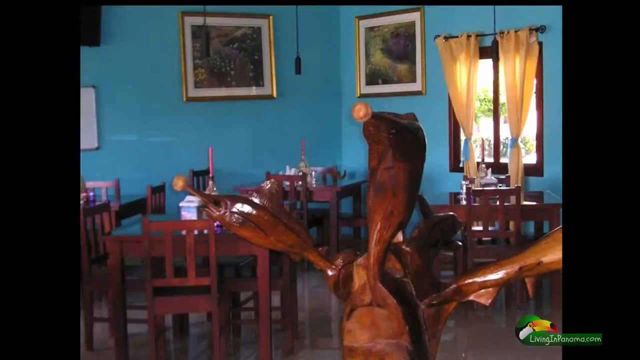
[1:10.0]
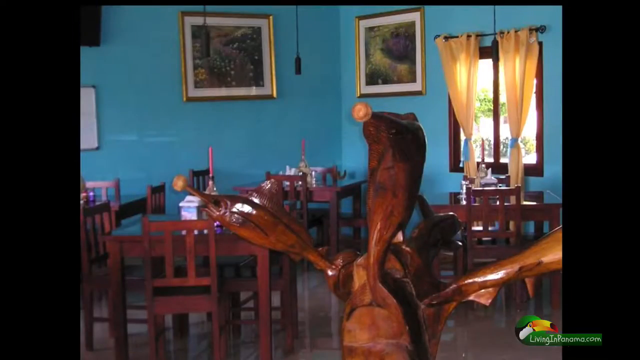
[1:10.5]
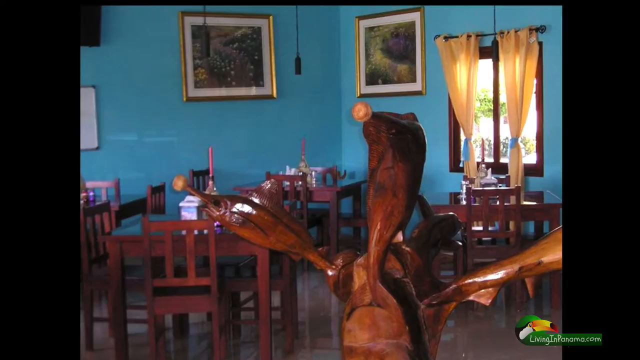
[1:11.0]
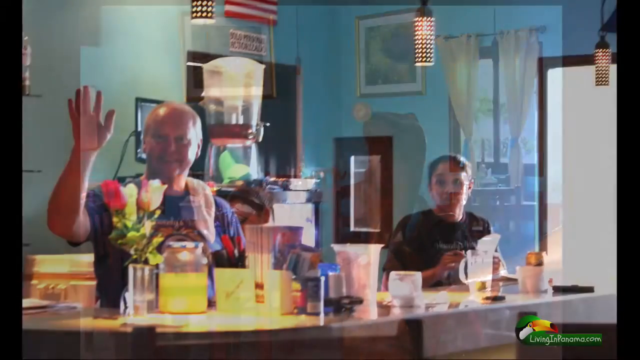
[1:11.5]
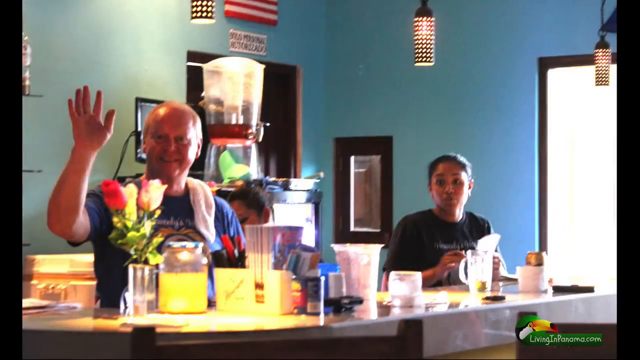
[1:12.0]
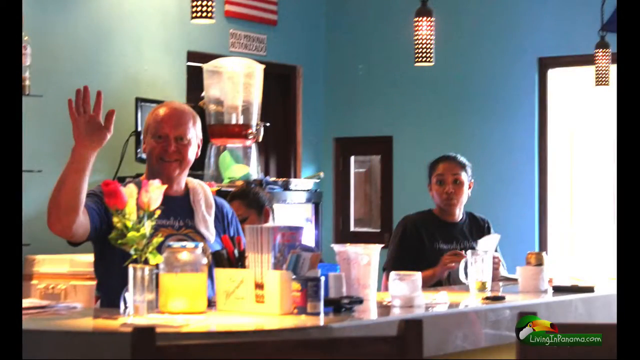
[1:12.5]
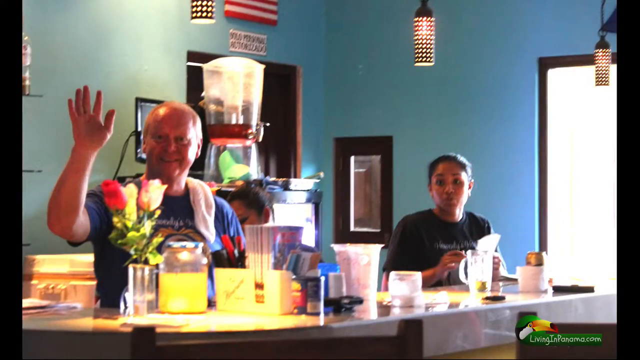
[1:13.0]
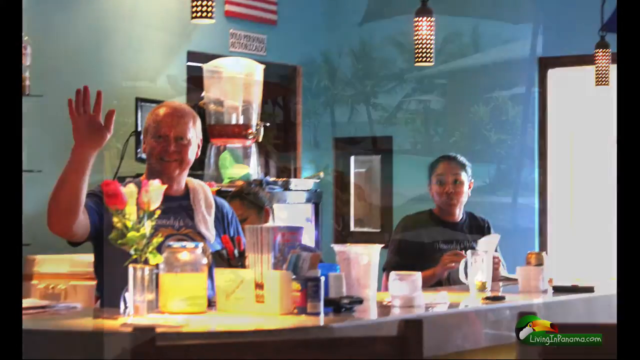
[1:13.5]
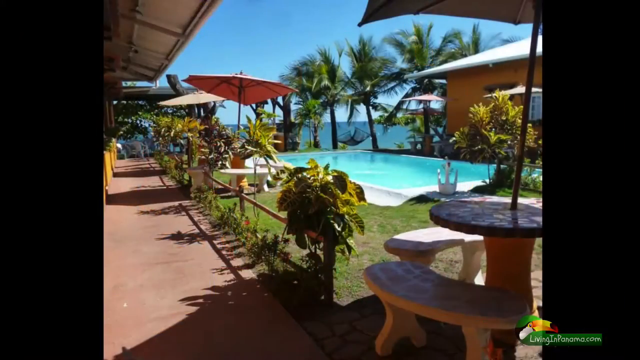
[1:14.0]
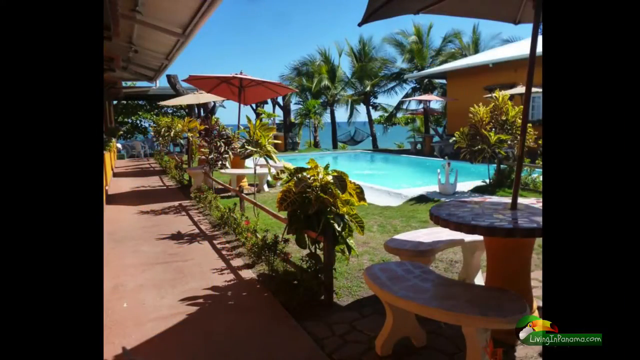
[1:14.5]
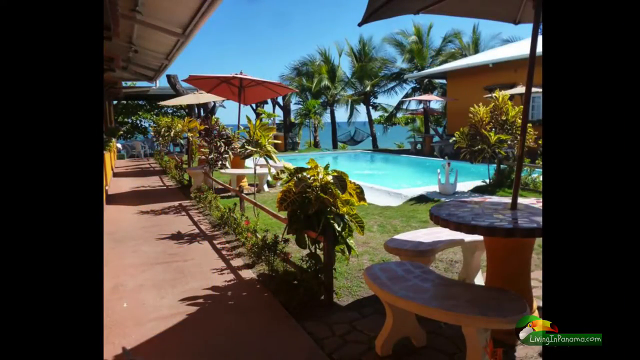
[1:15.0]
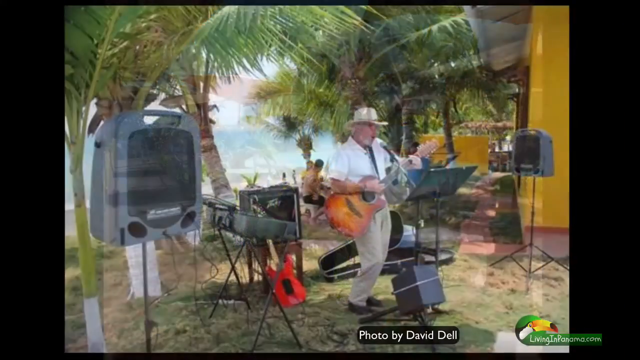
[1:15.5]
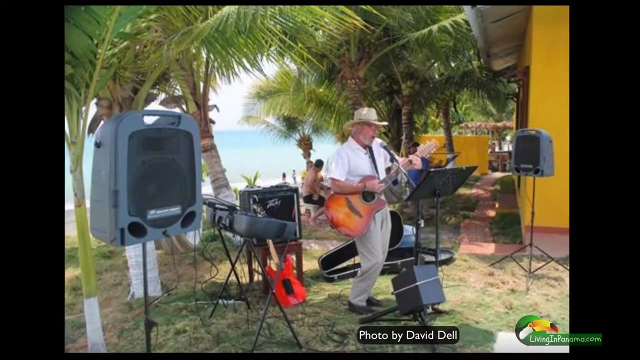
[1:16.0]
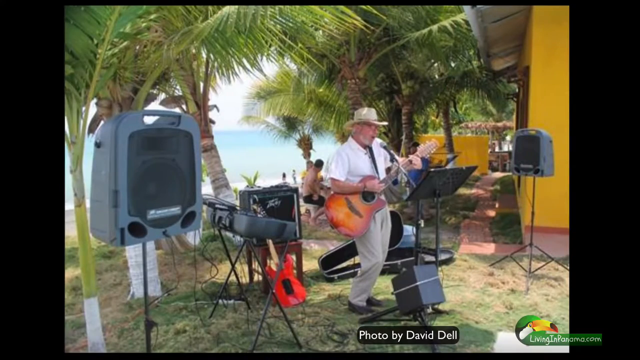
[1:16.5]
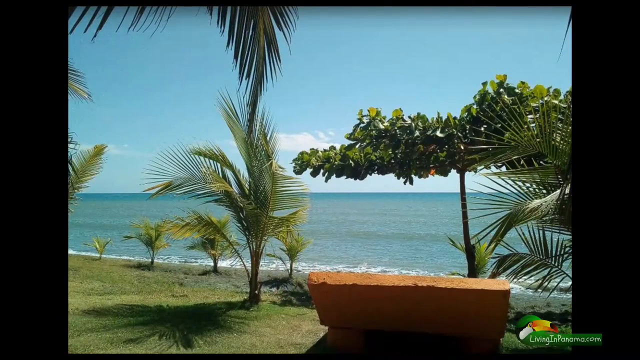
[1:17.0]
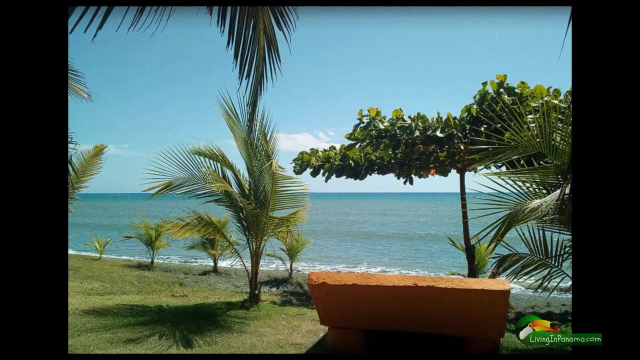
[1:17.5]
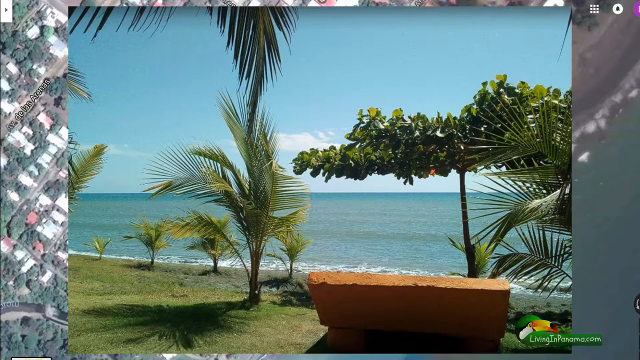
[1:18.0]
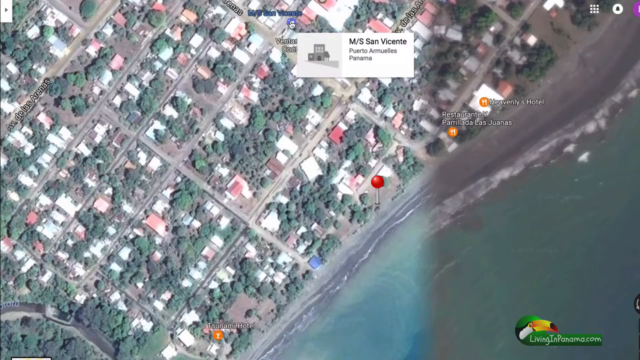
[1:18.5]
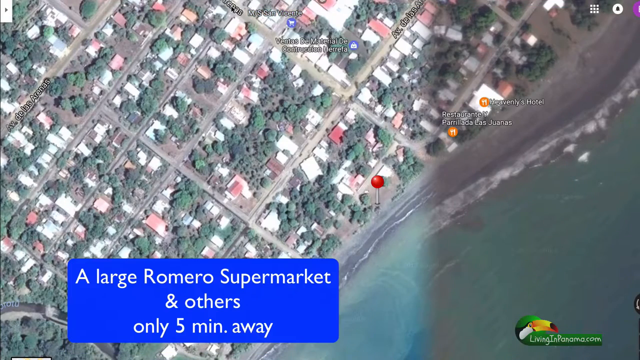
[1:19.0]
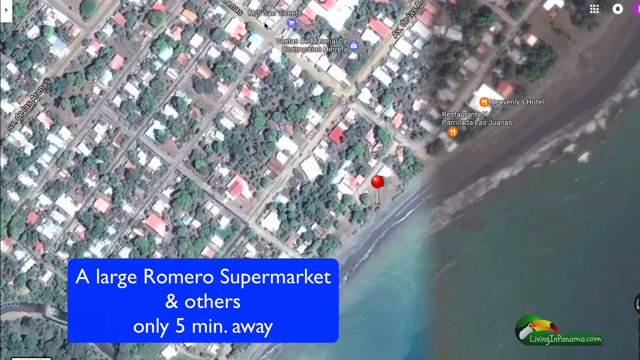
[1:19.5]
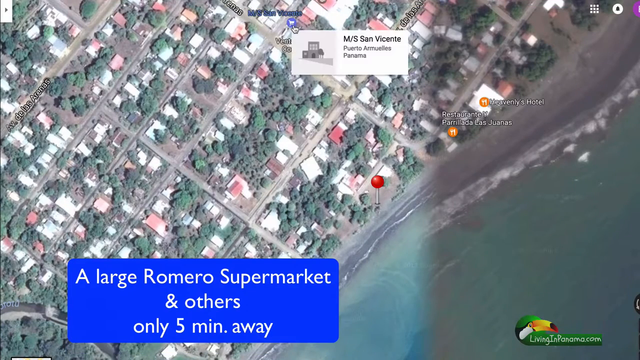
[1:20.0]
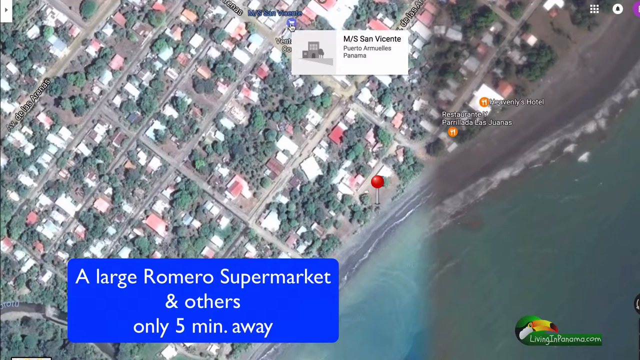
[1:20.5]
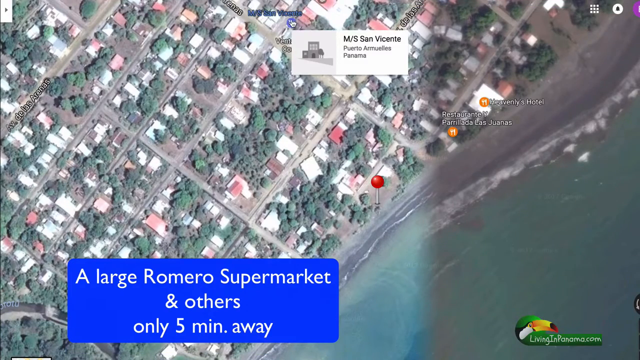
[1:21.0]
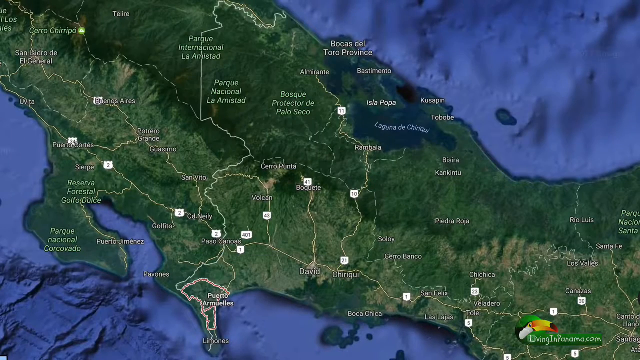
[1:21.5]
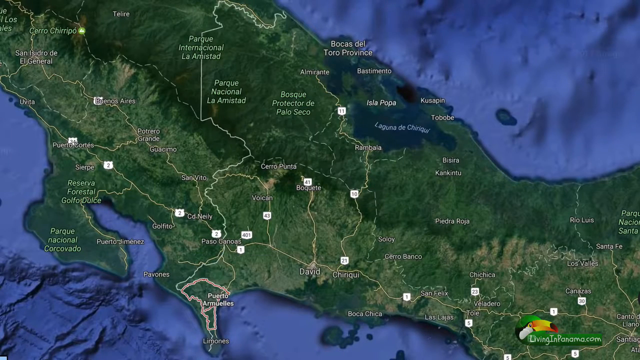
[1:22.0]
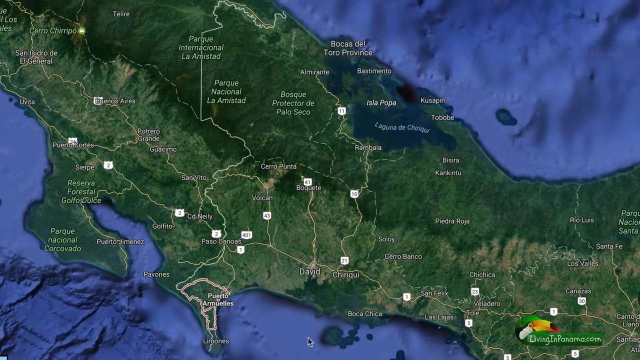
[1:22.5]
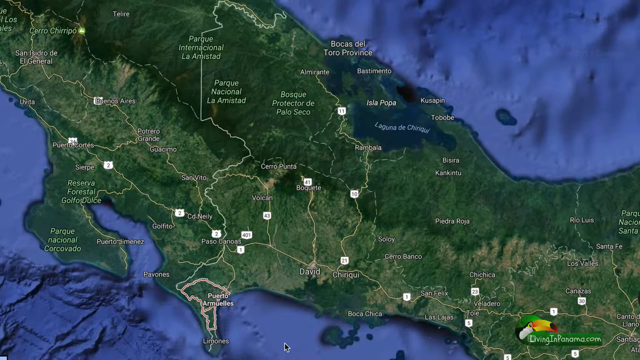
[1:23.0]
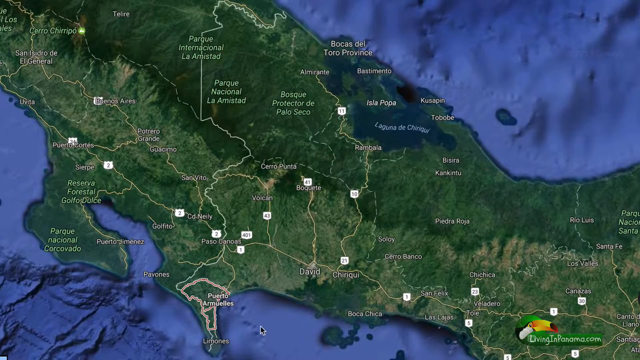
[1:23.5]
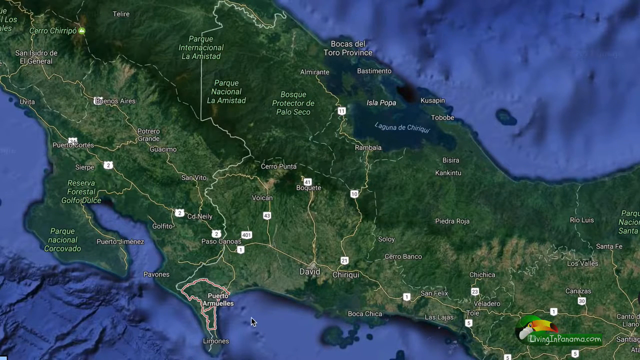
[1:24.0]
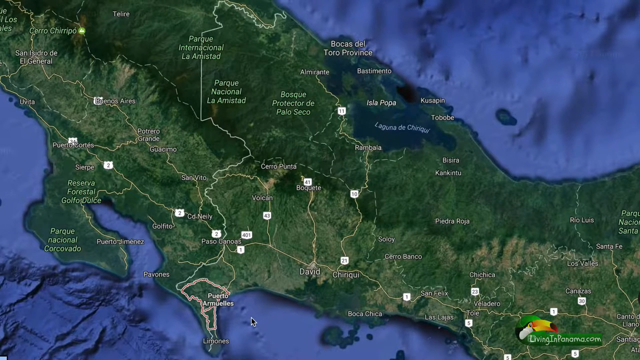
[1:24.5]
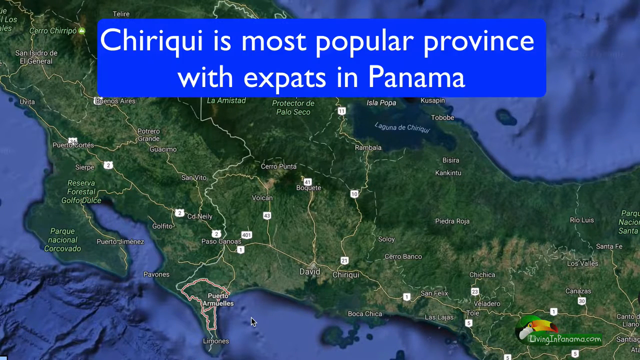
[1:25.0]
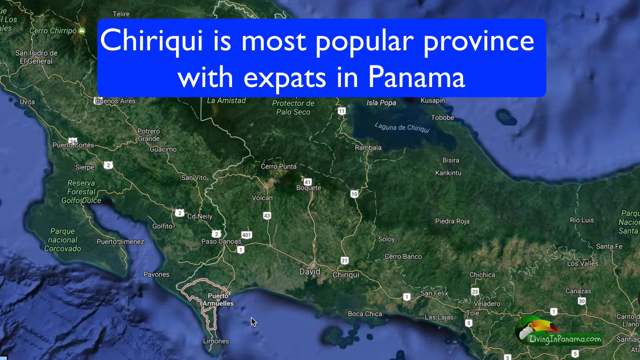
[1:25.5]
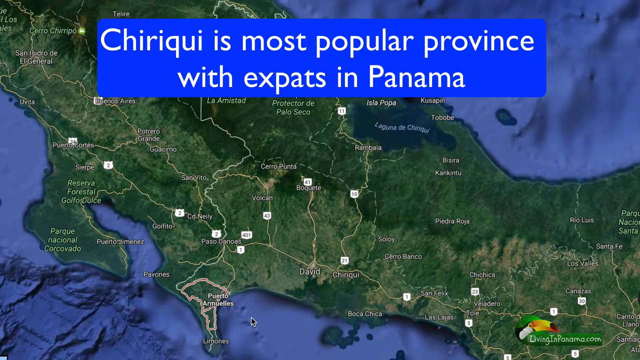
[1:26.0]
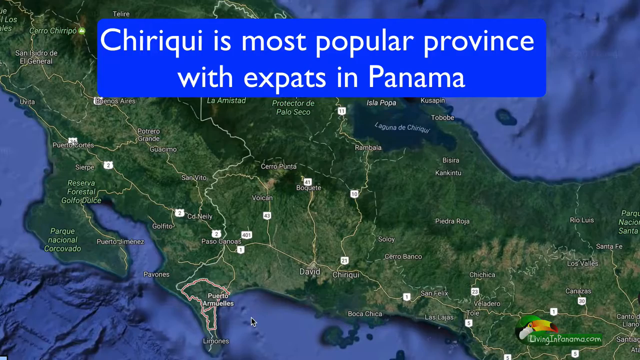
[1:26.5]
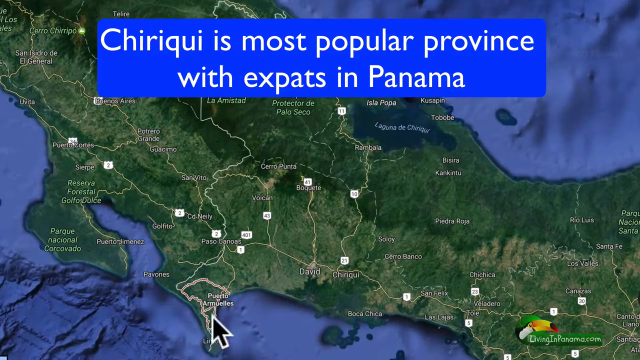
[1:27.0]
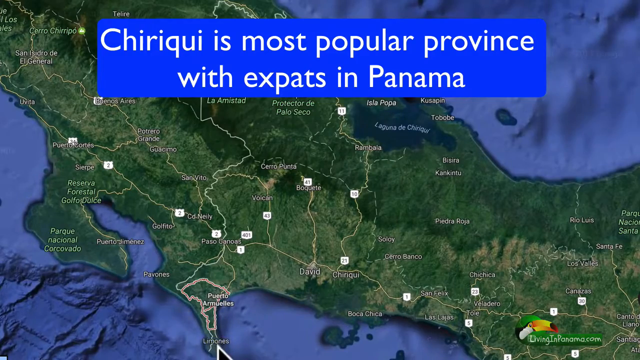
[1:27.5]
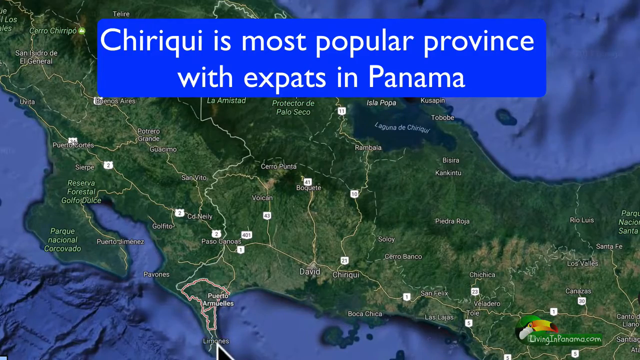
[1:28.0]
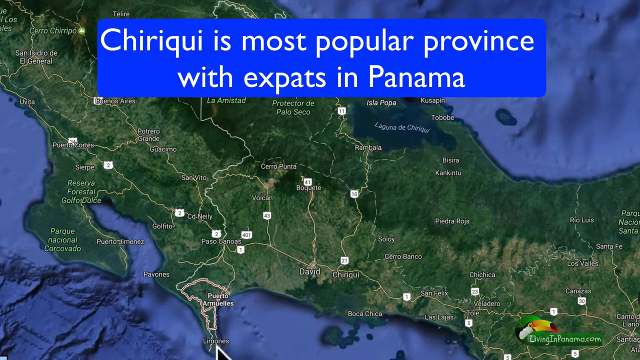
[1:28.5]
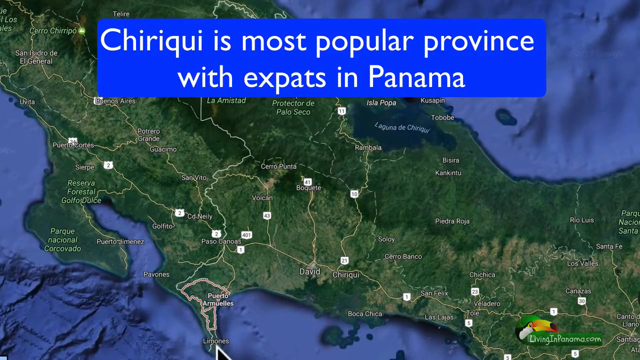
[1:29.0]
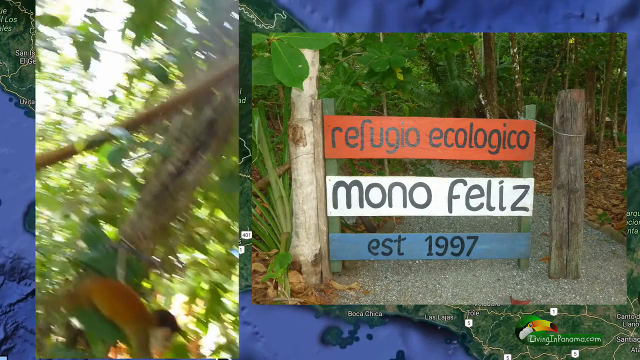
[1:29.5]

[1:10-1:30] What looks to be a restaurant interior appears, with blue walls, lots of wooden furniture, red candles on the tables and yellow curtains in the background. It cuts to an image of two people standing behind a restaurant or cafe worktop: a man waving with a towel around his neck, and a woman who looks to be further away, doing something at the counter. Next is an image of a swimming pool with umbrellas and palm trees all around it, then an image of a man on a guitar with lots of speakers and musical instruments around him; he wears a Panama hat and light-coloured clothing. An image of the beach with more palm trees, sand and a grass area follows. It cuts back to a Google overview image that says "a large Romero supermarket and others only five minutes away", then to an overview of a Panama map which says "Chiriqui is the most popular province with expats in Panama".